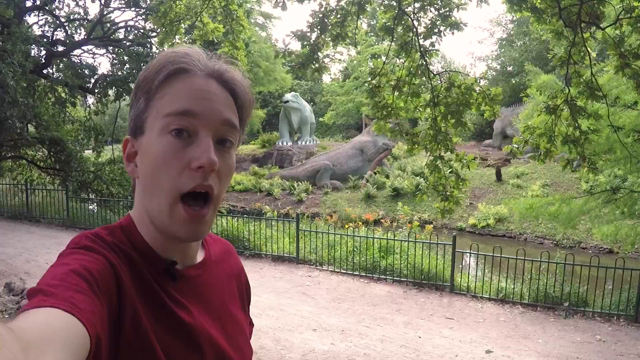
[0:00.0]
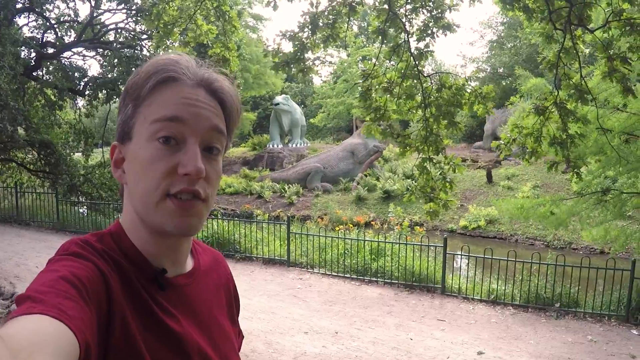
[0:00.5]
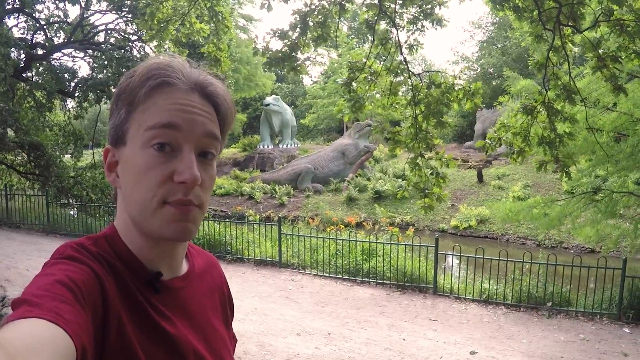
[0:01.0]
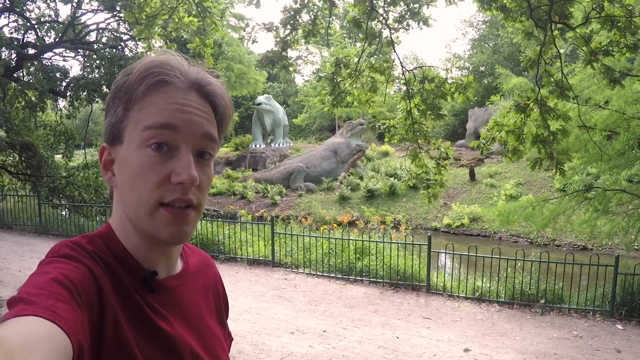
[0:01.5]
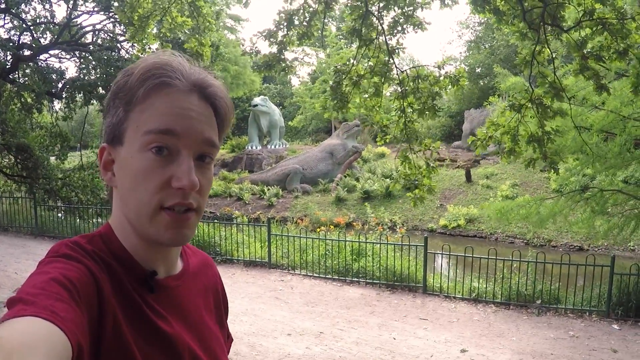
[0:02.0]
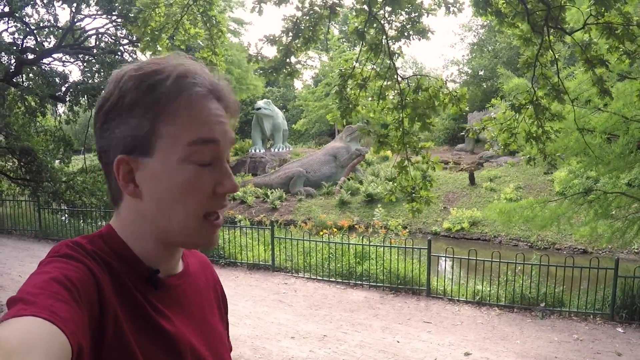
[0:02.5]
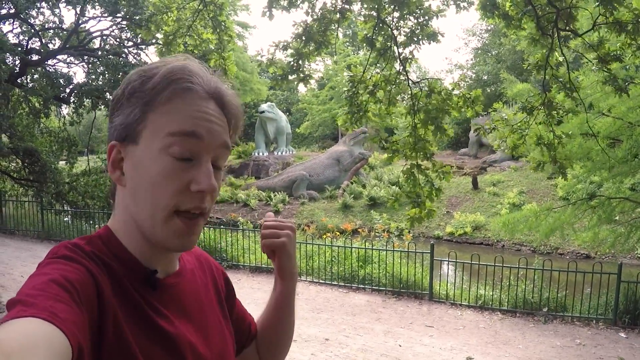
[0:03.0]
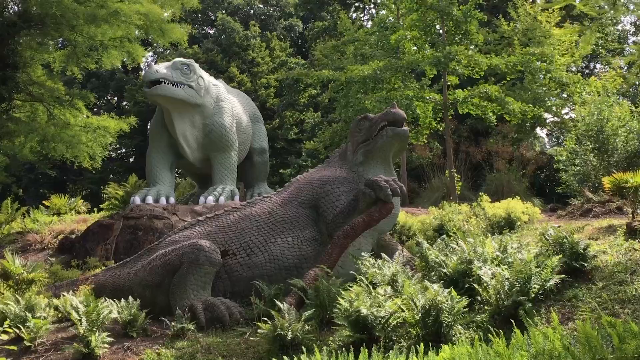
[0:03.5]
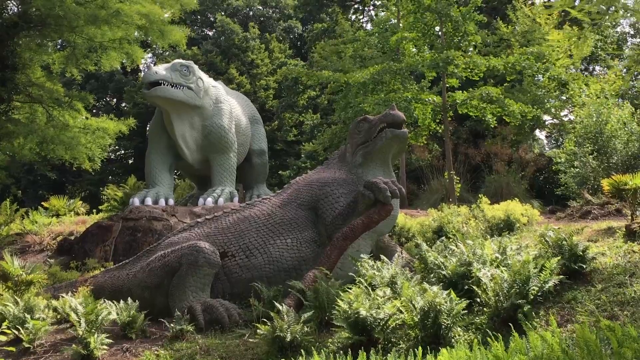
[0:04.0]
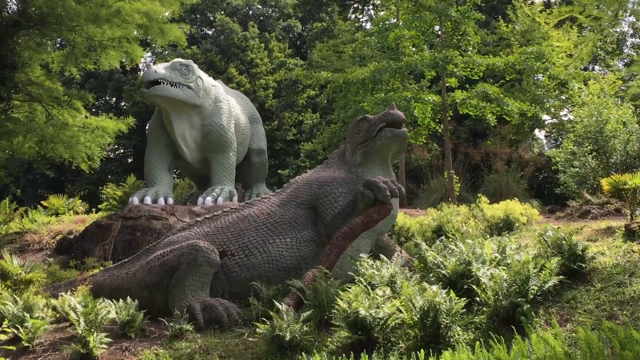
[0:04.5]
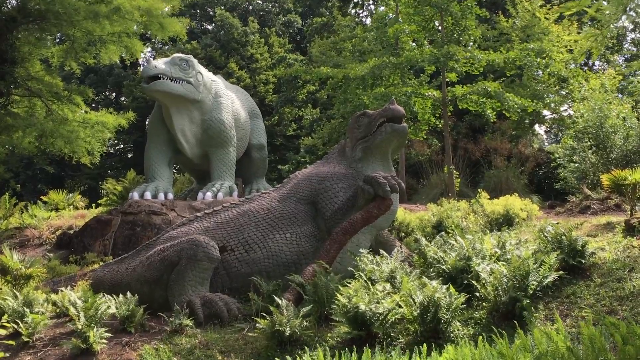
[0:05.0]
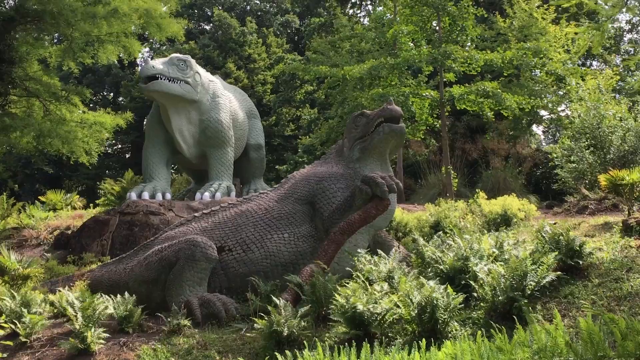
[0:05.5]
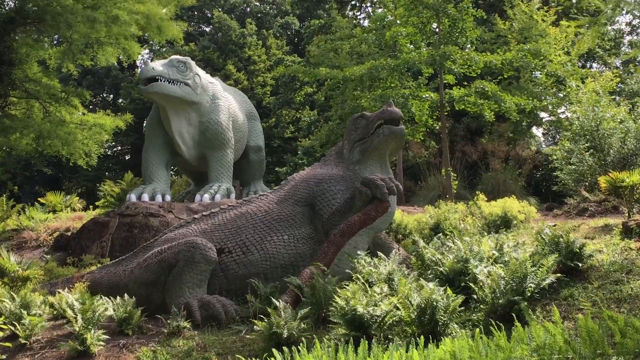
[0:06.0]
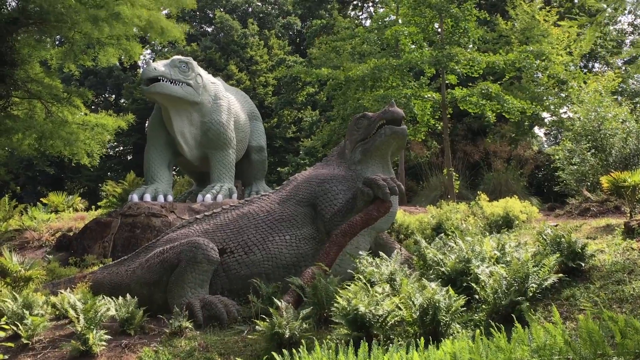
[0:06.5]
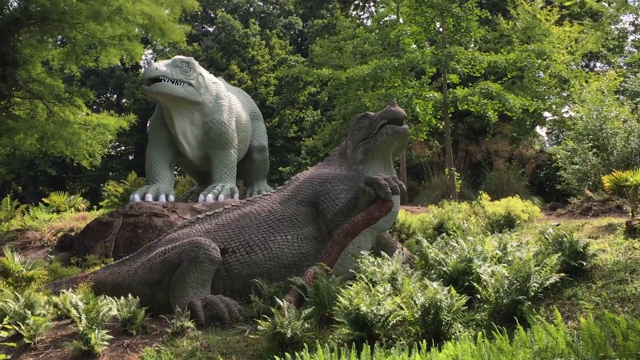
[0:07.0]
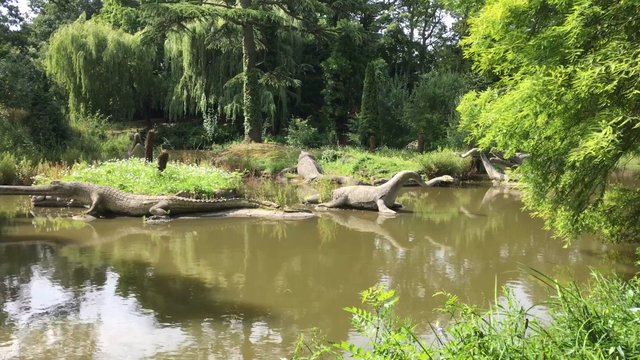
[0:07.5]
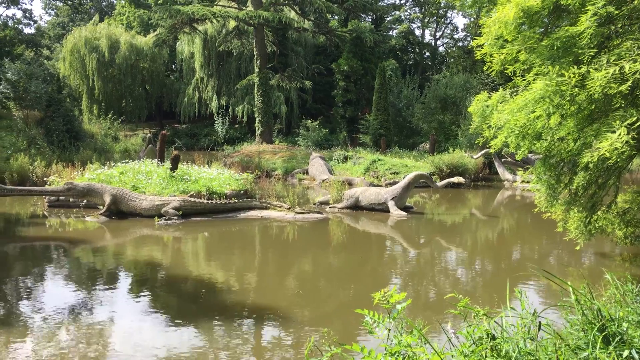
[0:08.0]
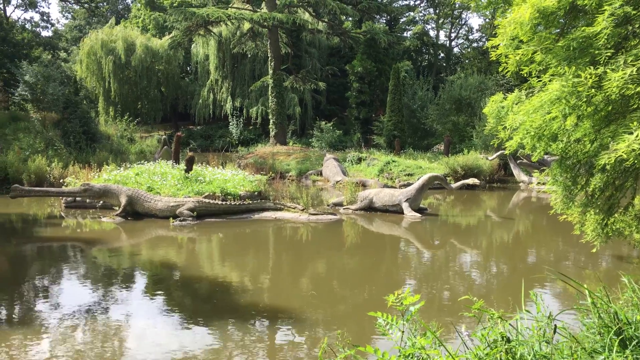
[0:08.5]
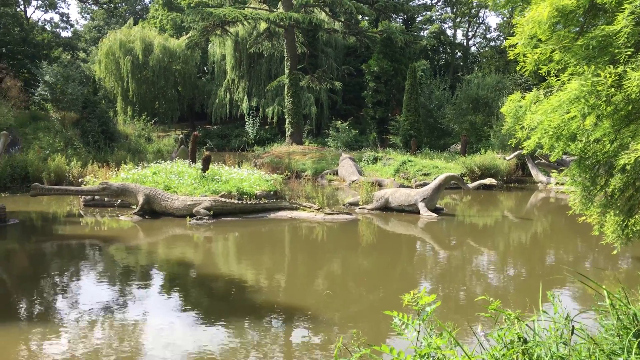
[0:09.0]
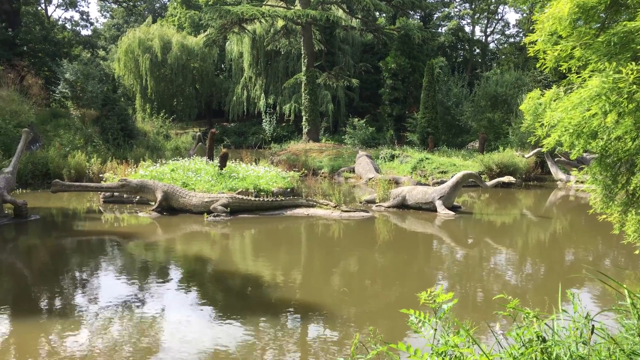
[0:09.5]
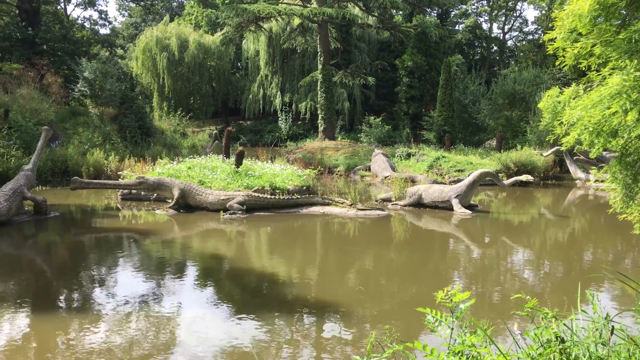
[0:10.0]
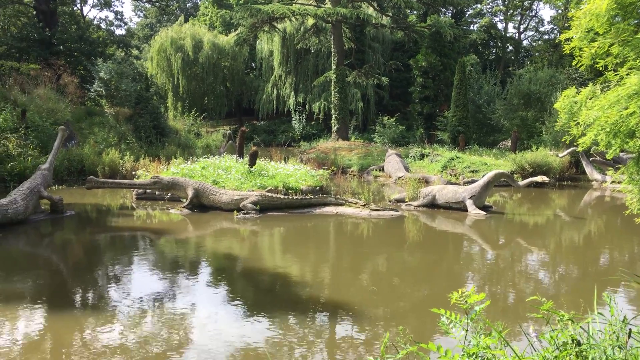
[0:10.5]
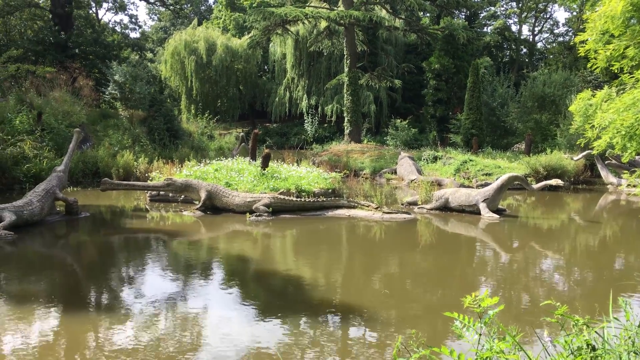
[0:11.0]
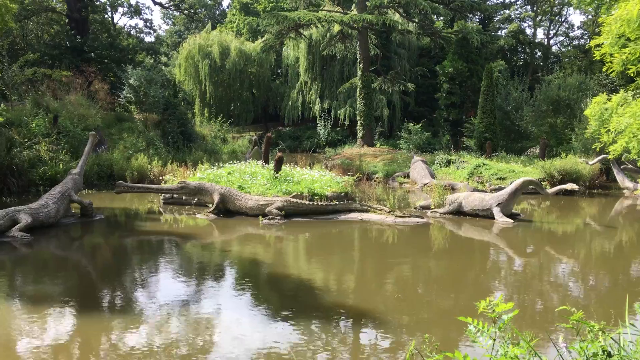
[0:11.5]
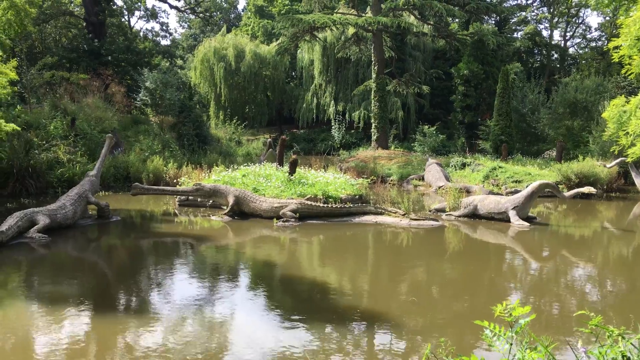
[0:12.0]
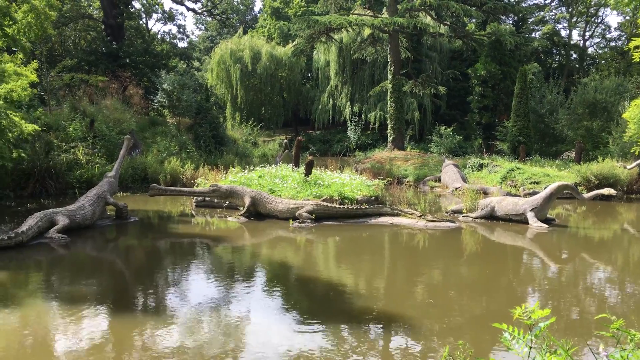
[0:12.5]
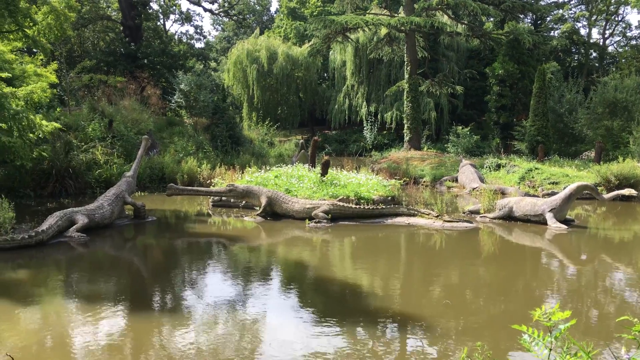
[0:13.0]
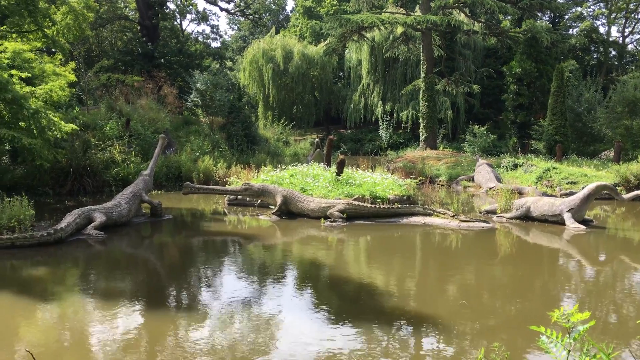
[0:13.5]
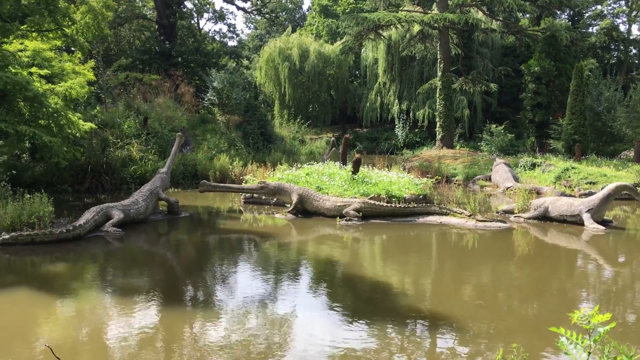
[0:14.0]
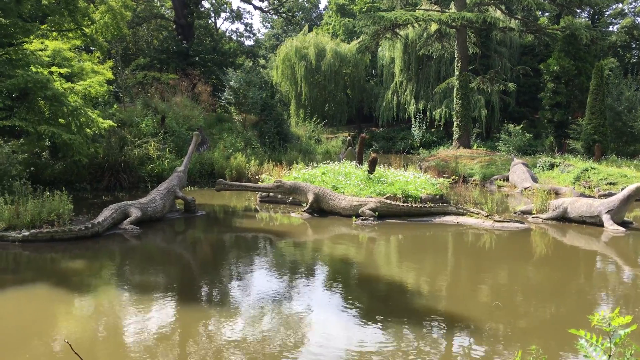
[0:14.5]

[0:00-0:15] A man talks to the camera. He has light brown hair and wears a short-sleeved red t-shirt, and he is standing outdoors in what looks like a park. He points behind him, where there is a low metal fence; beyond it are trees, low hills with grass on them, and statues or models of large dinosaurs. The view switches to a close-up of two of the dinosaur models: one is standing on a rock and another is standing just below it, and they are surrounded by trees. Next comes a view of a lagoon surrounded by similar large dinosaur models. At least five models are sitting in the water and on the grass around it. Two of them are very long with long snouts, and the other three look more like alligators lying in the water and on the grass behind it. Two of them have very long necks. The trees around them are very heavily covered in leaves, and the area is very densely forested. The water is a bit murky and brown, and it is very bright outside.